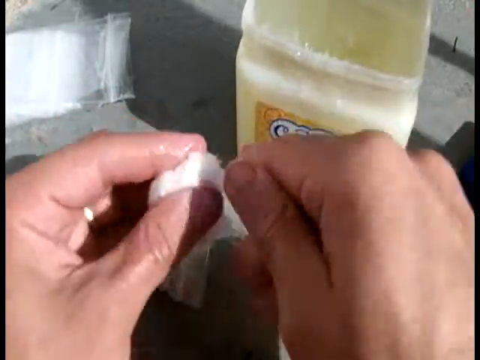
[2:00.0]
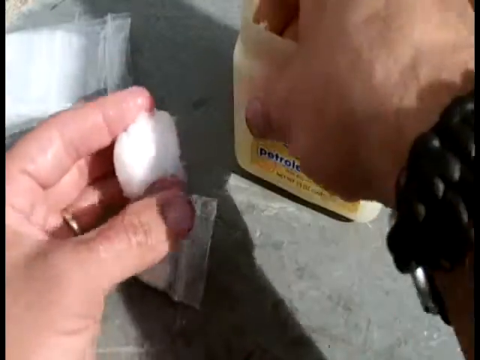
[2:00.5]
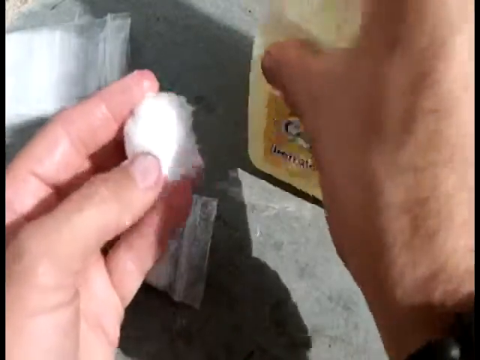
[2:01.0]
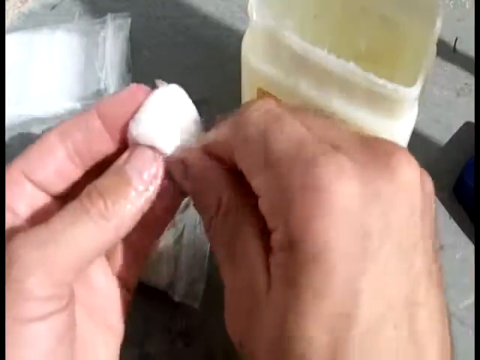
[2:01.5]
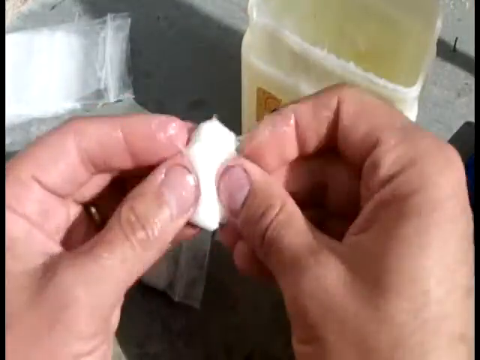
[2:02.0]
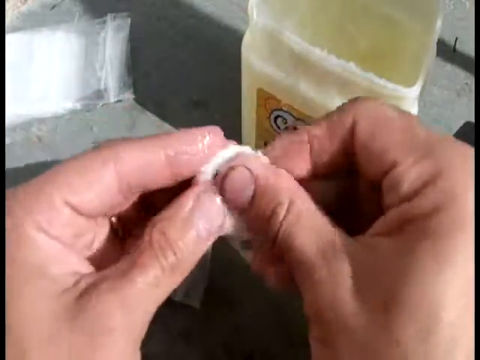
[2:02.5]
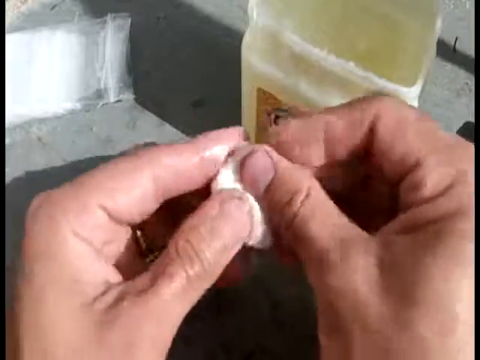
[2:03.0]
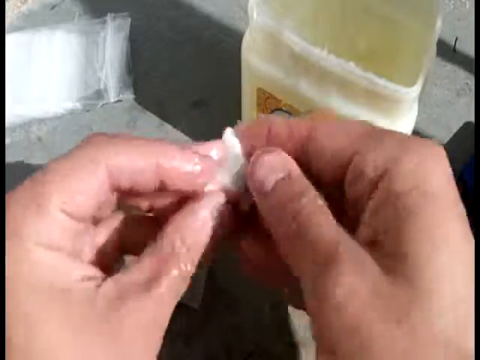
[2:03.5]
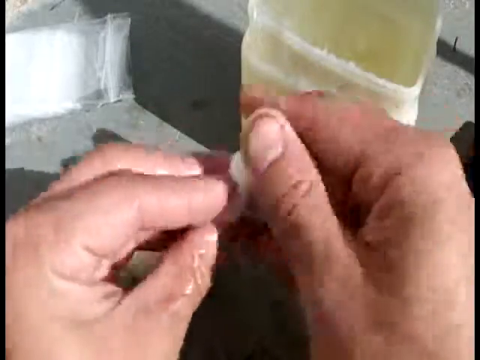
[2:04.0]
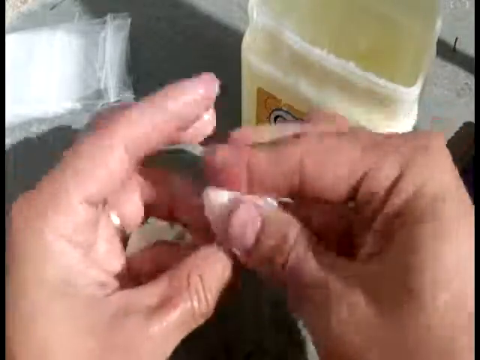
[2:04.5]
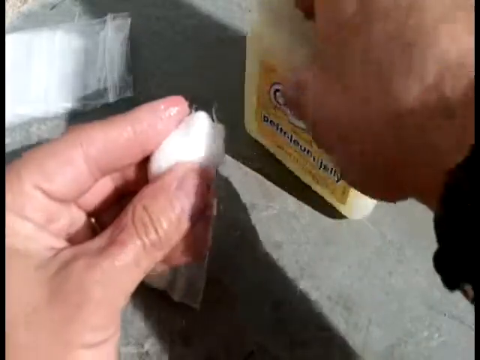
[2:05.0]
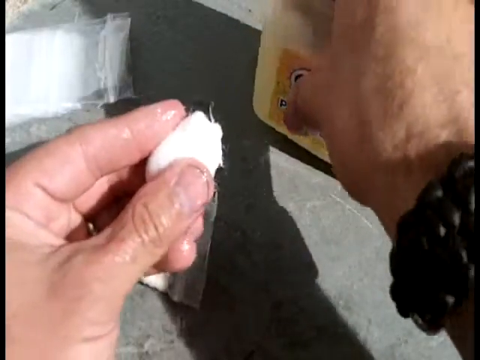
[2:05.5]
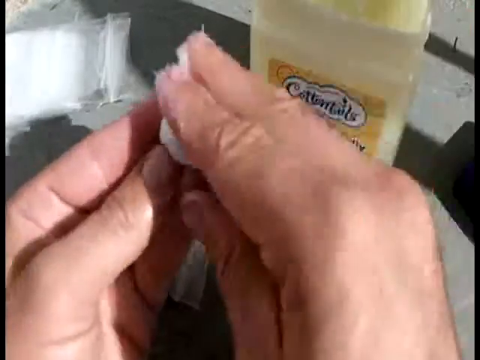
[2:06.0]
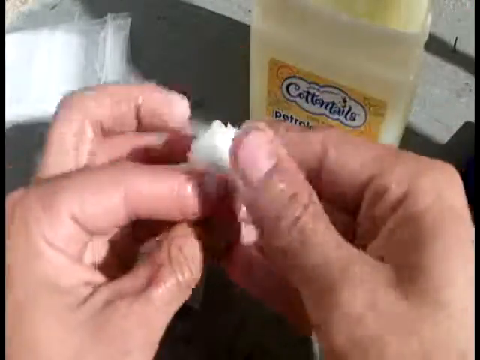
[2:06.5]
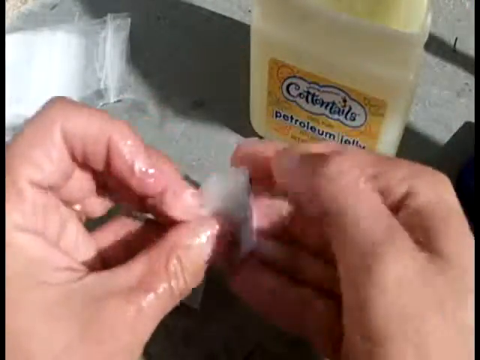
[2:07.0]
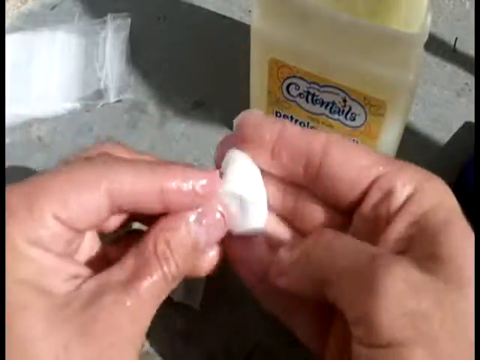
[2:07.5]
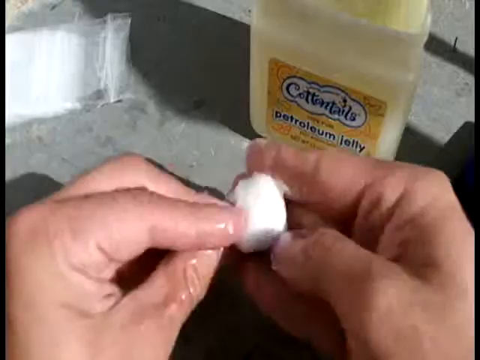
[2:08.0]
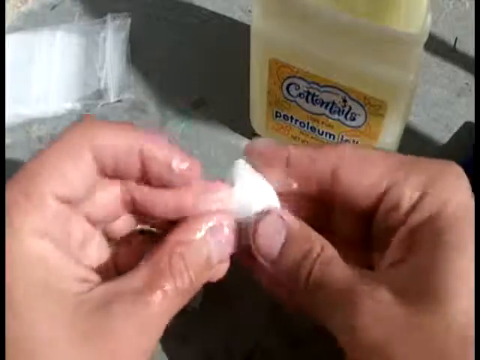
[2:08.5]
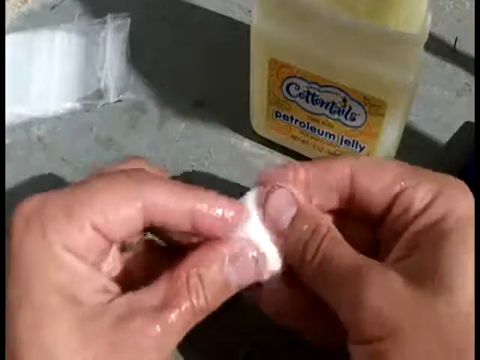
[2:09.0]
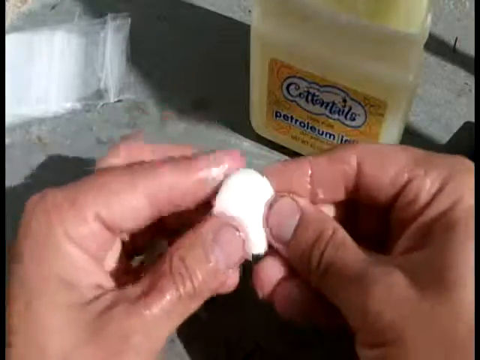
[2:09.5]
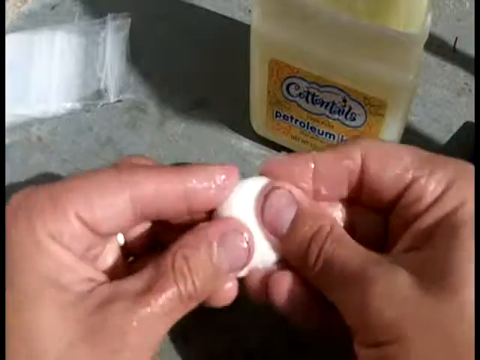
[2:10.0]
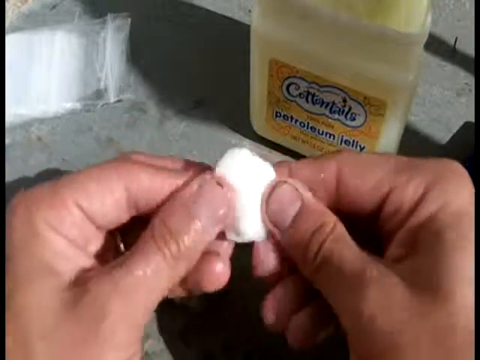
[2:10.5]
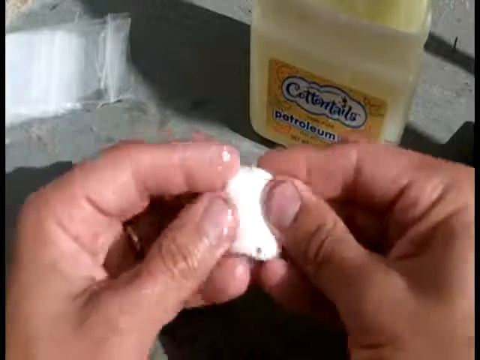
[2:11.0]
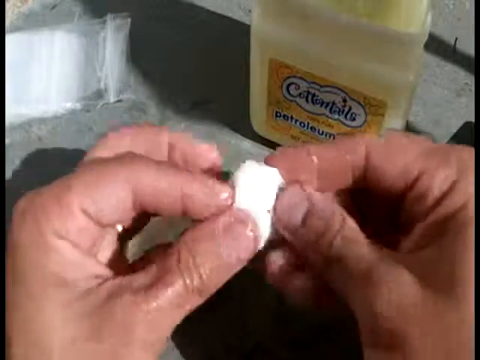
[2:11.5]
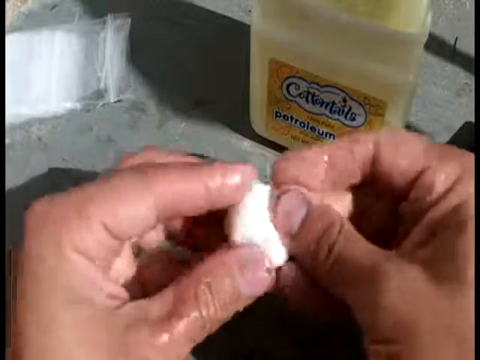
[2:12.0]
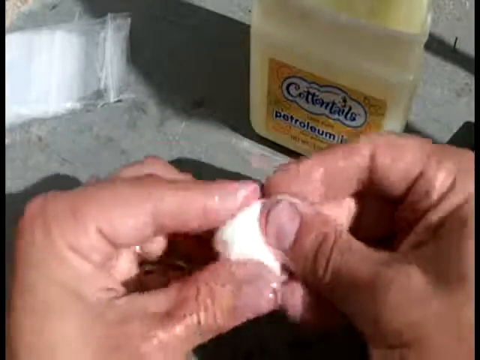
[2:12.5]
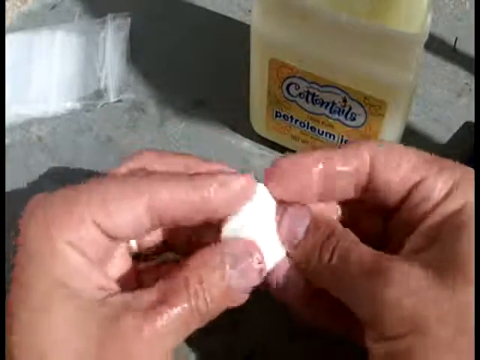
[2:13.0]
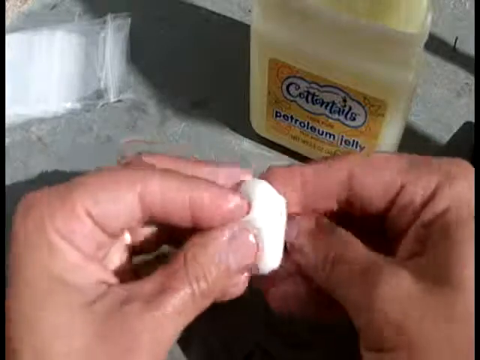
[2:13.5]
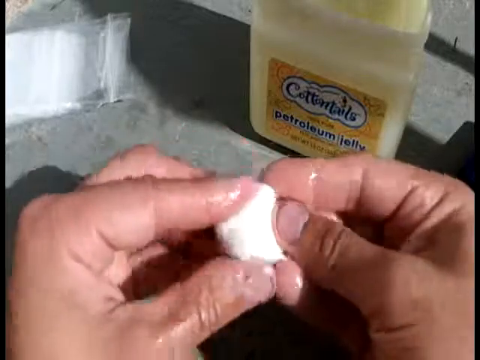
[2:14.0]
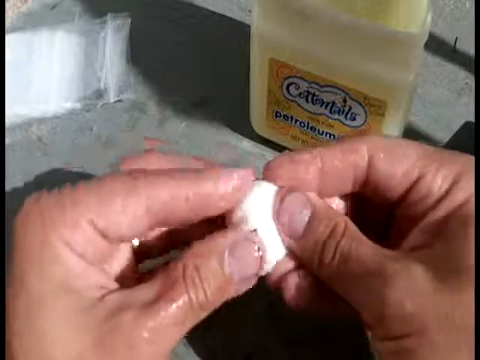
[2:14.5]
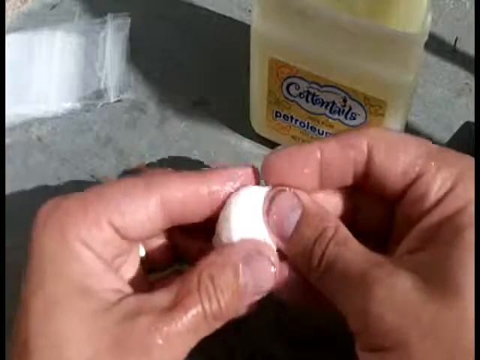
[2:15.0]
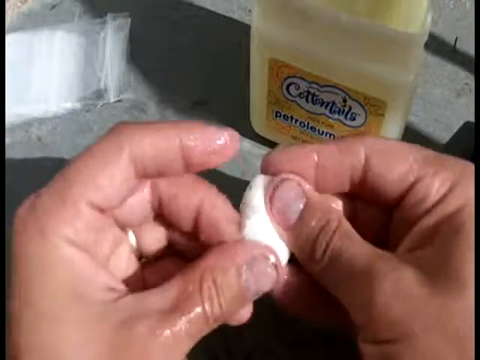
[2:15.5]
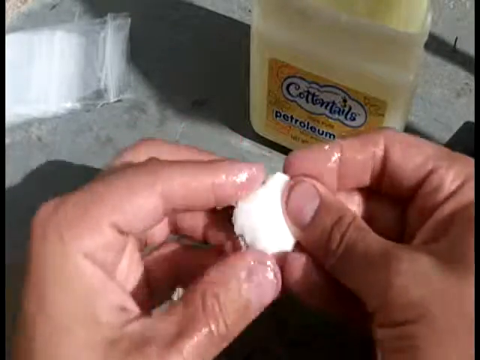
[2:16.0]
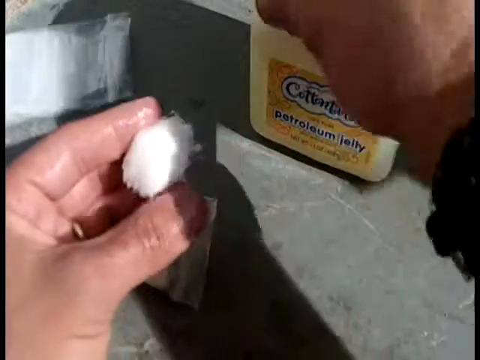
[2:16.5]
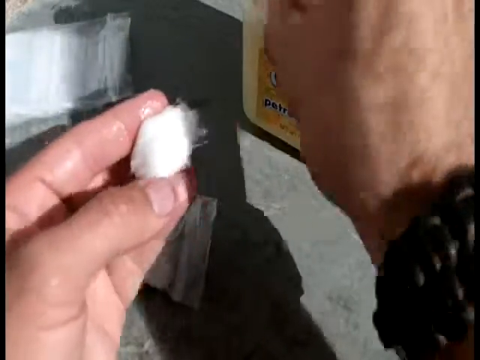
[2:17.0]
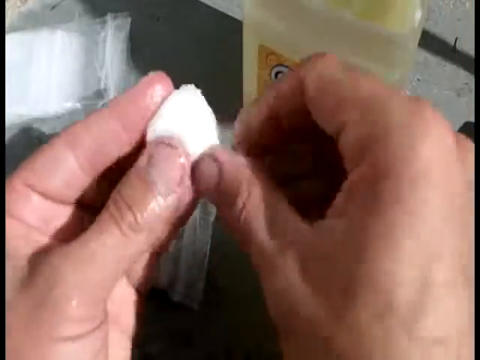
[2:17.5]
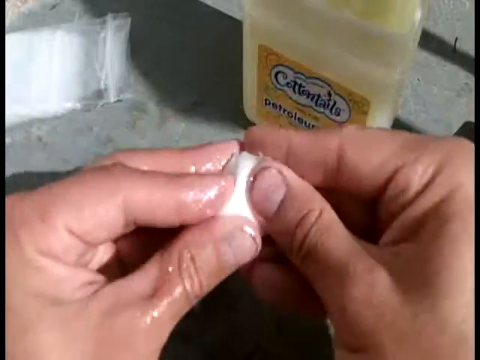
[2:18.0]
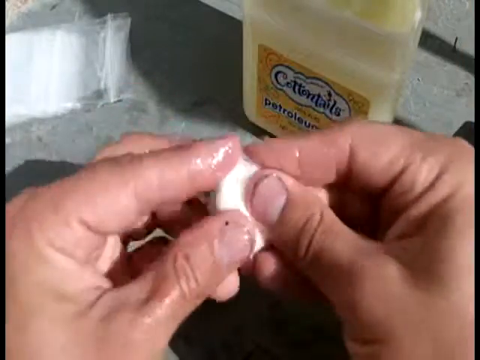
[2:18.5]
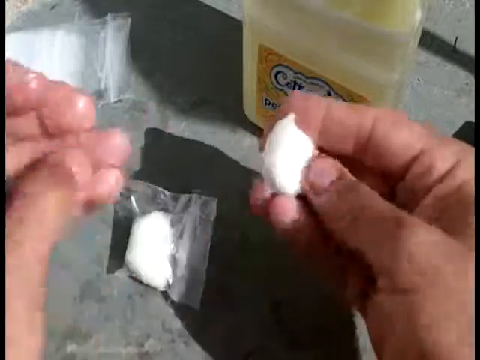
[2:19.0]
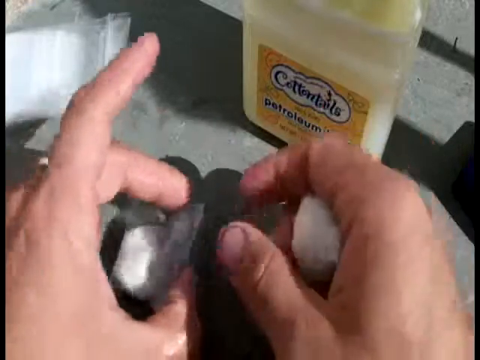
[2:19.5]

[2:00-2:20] A close-up shows a pair of hands holding a white cotton ball. The right hand reaches into the jar of light yellow Cottontail's petroleum jelly, digs out a small scoop, and wipes it onto the cotton ball. The hands quickly massage the cotton ball, rubbing the petroleum jelly all over and rotating it between the fingers, which are coated with the shiny jelly. The right hand reaches into the jar again, picks out a big scoop, and wipes it onto the cotton ball, and the hands again rub and massage it while rotating it between the fingers, making sure every area is coated. They reach into the petroleum jelly one last time, pick out a little scoop, and rub it onto the cotton ball, massaging it in everywhere. The hands then pick up the small, clear Ziploc bag that already has one petroleum jelly coated cotton ball inside.